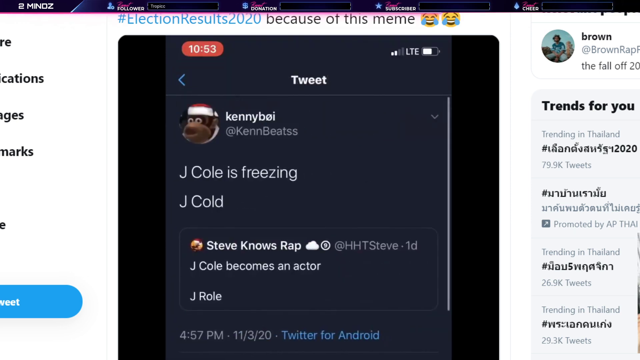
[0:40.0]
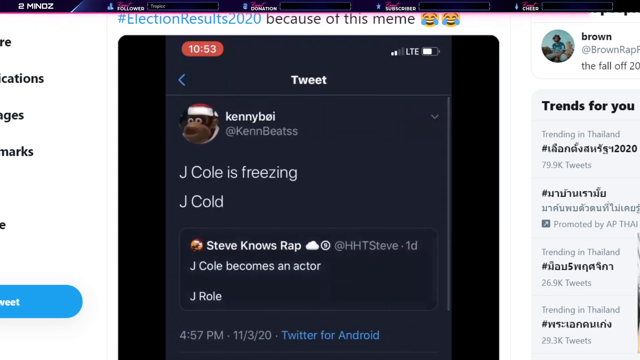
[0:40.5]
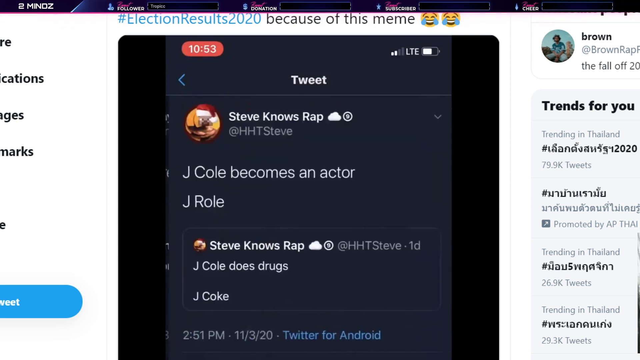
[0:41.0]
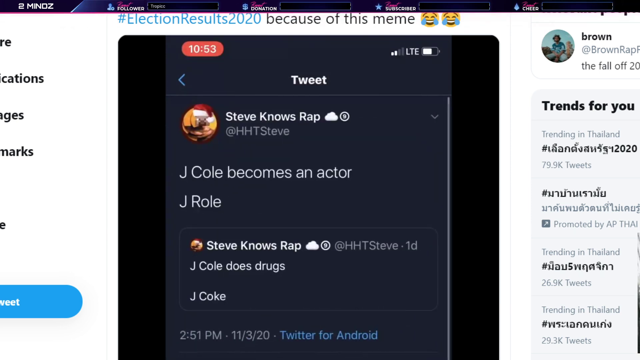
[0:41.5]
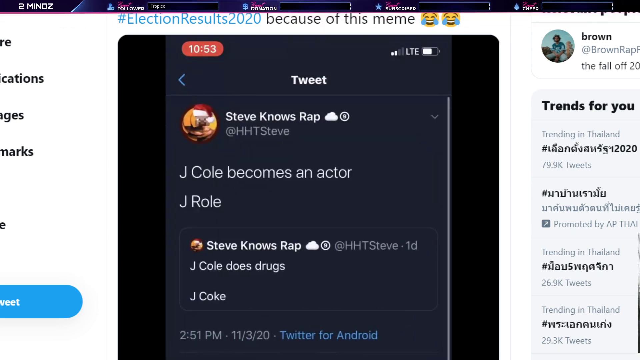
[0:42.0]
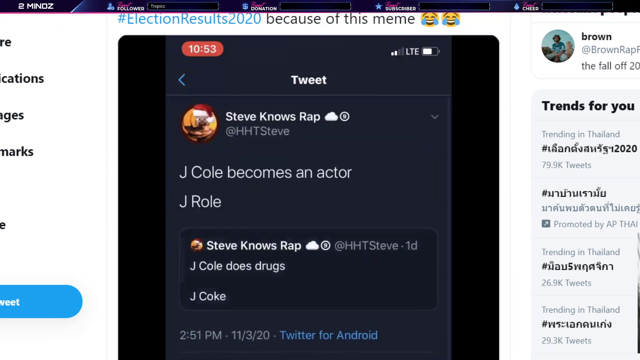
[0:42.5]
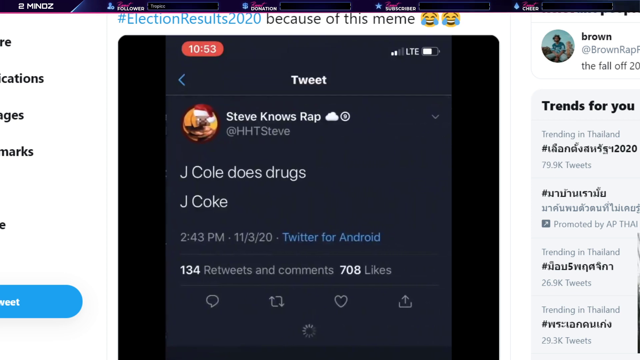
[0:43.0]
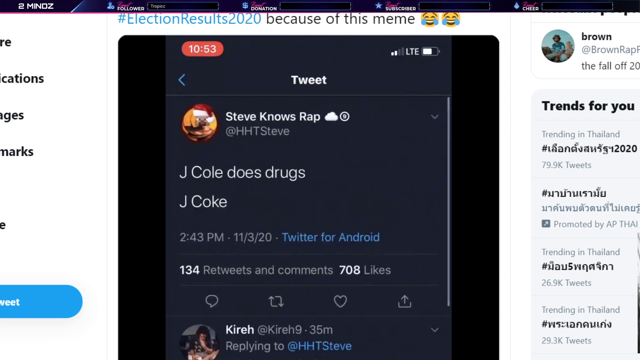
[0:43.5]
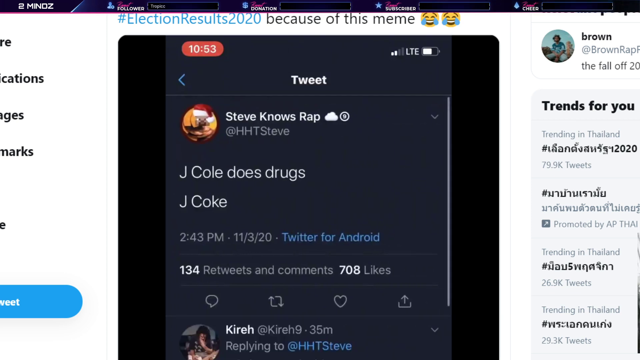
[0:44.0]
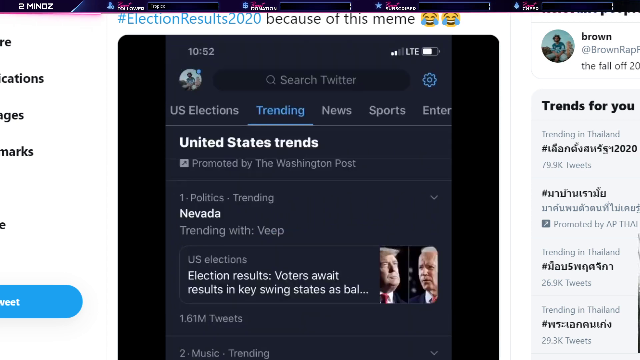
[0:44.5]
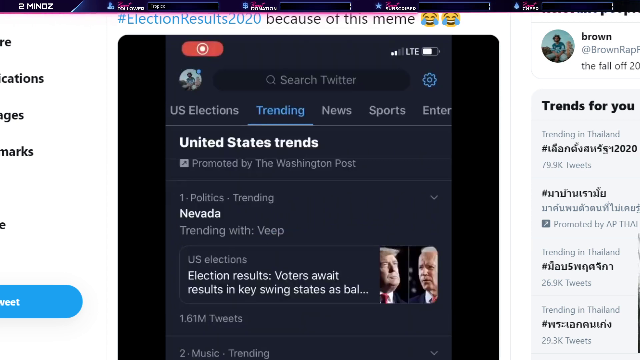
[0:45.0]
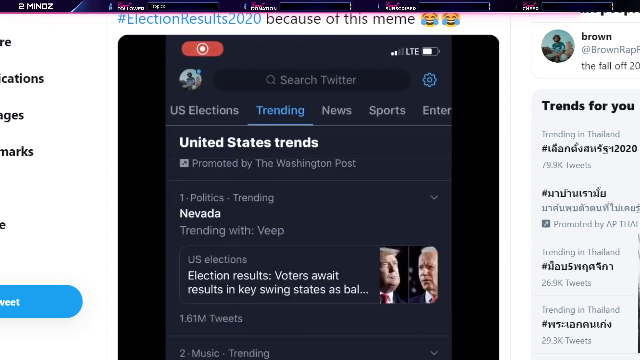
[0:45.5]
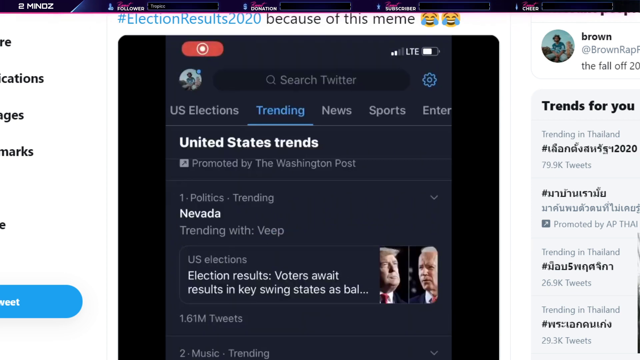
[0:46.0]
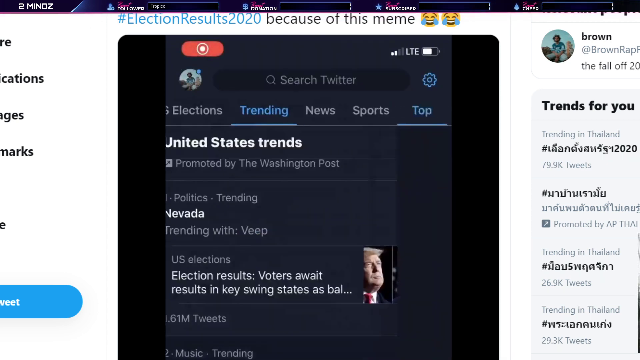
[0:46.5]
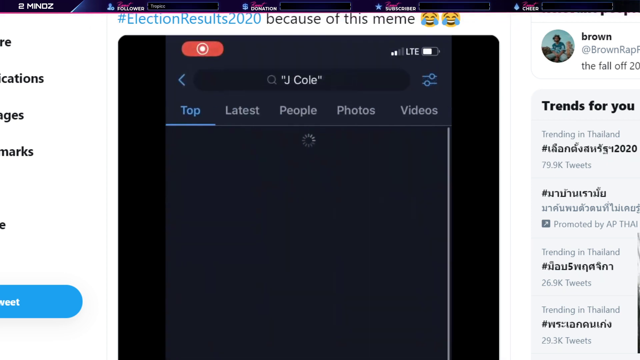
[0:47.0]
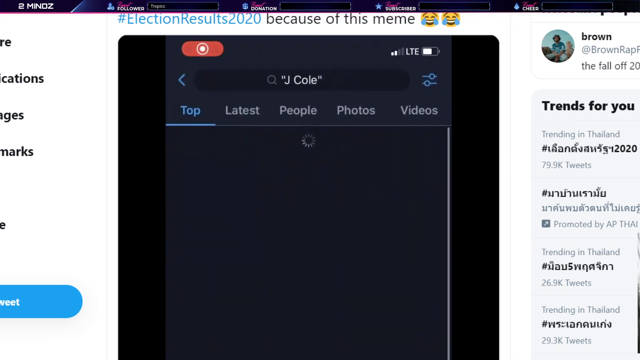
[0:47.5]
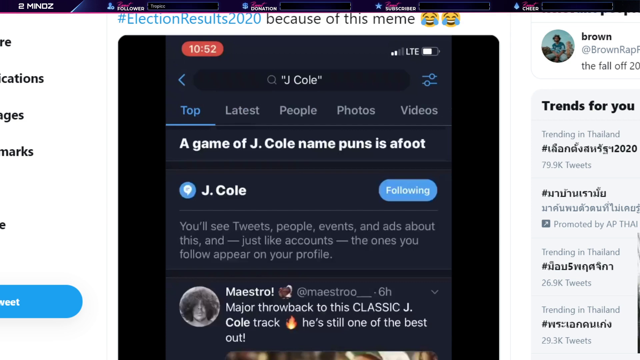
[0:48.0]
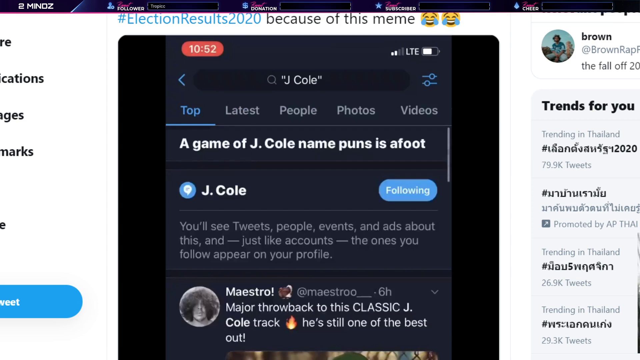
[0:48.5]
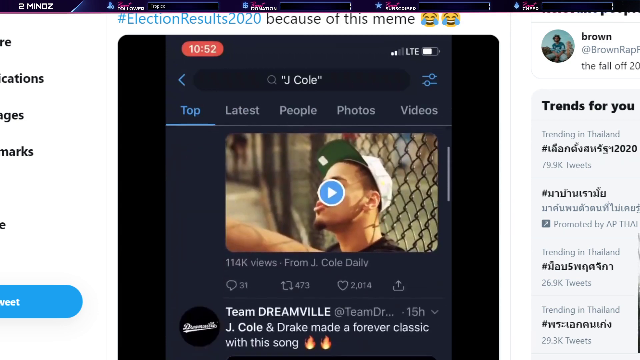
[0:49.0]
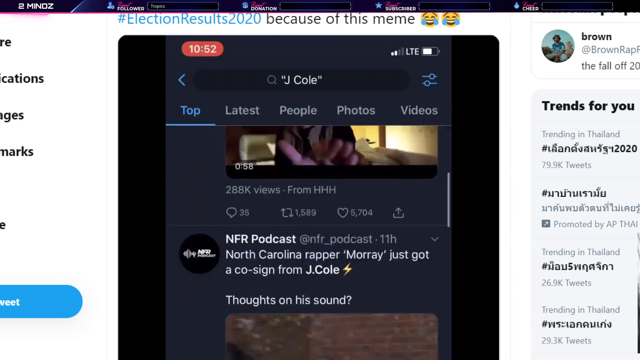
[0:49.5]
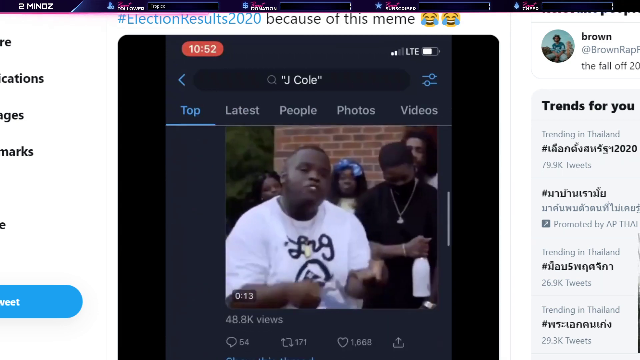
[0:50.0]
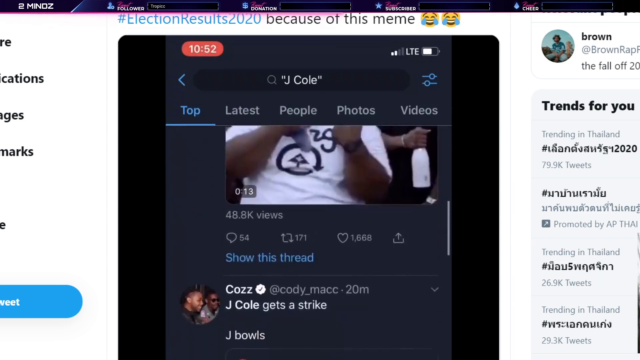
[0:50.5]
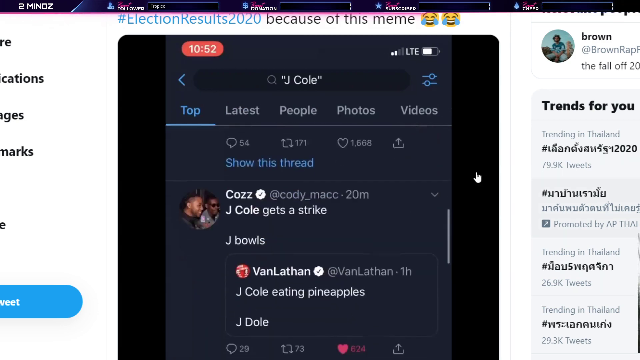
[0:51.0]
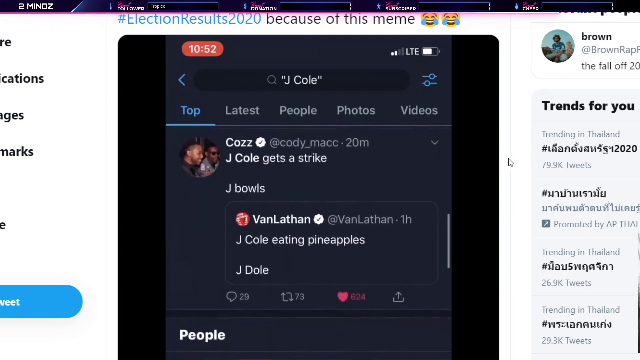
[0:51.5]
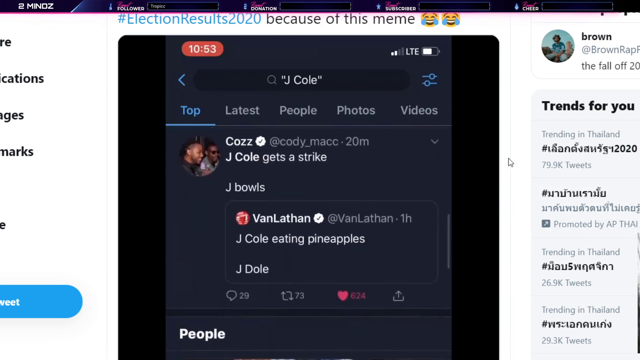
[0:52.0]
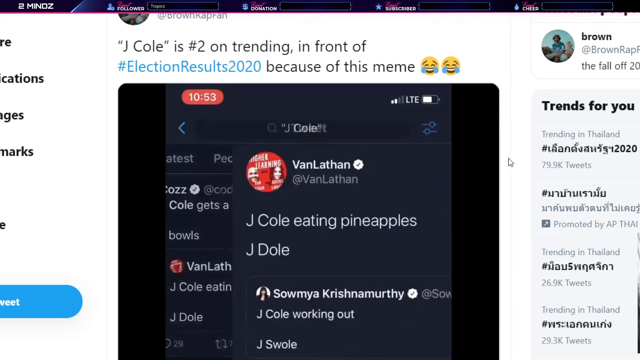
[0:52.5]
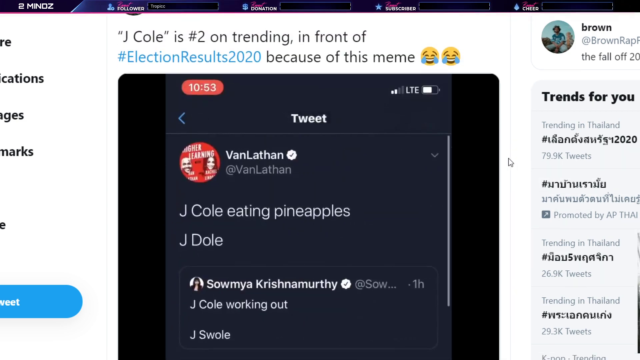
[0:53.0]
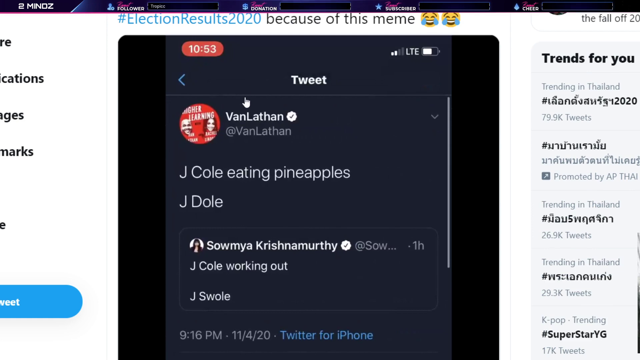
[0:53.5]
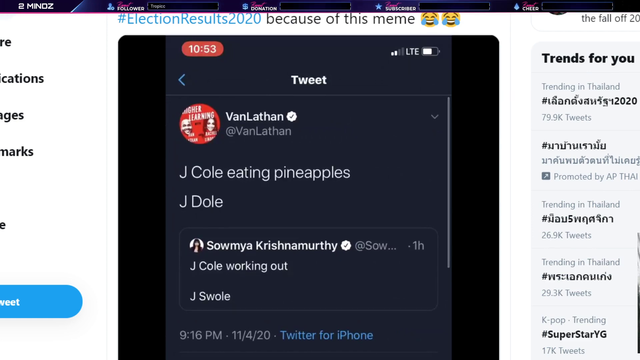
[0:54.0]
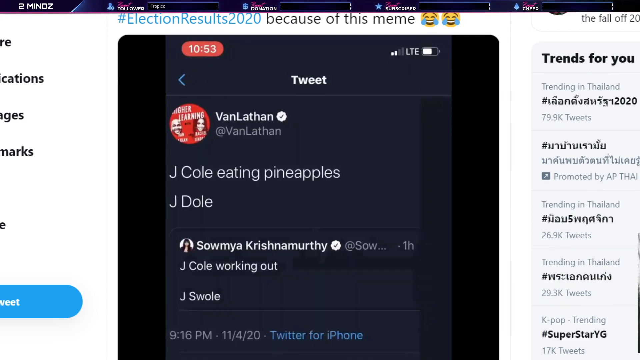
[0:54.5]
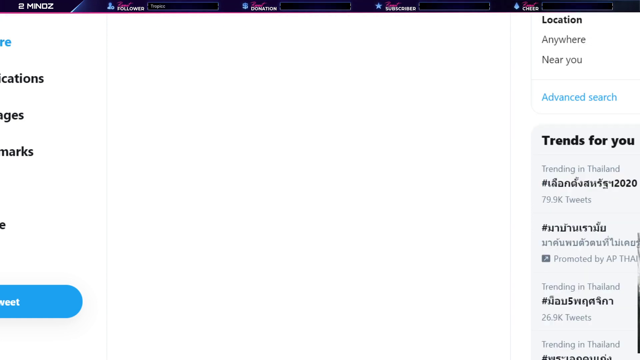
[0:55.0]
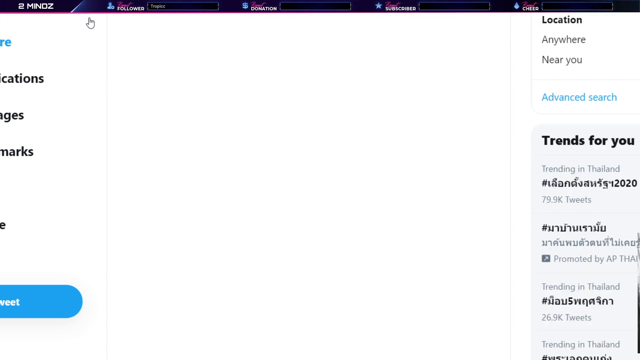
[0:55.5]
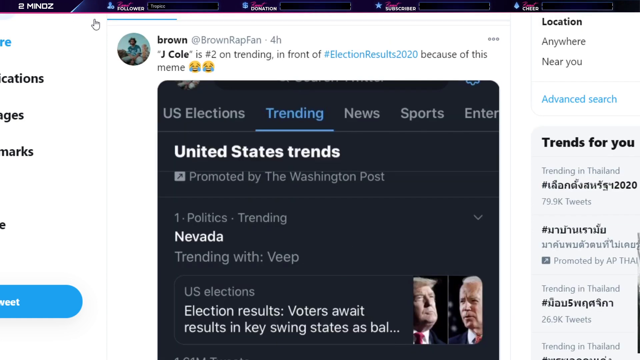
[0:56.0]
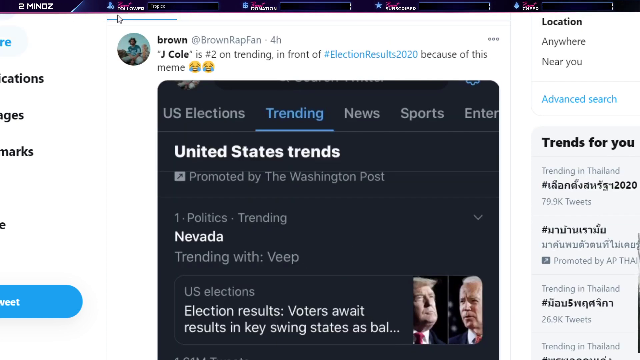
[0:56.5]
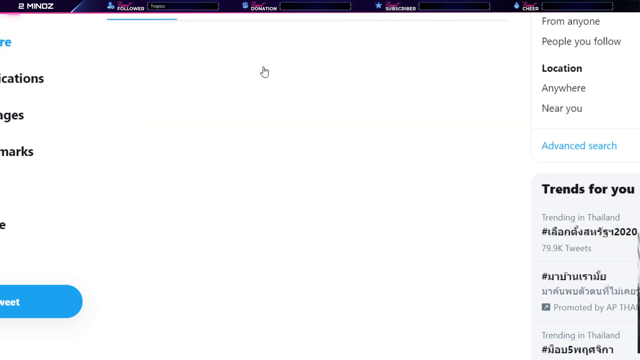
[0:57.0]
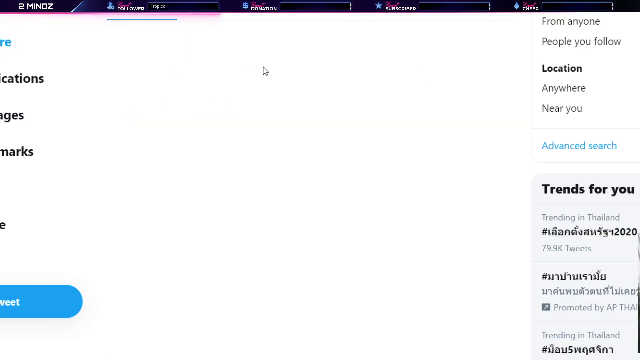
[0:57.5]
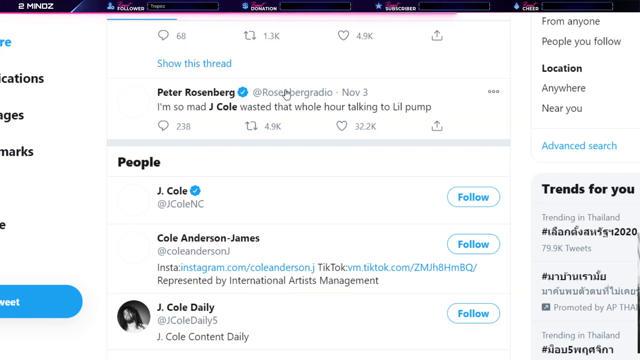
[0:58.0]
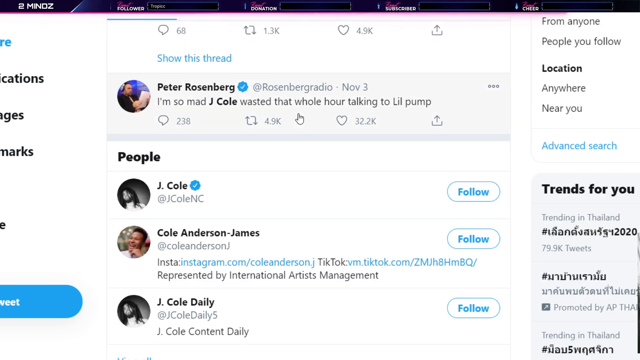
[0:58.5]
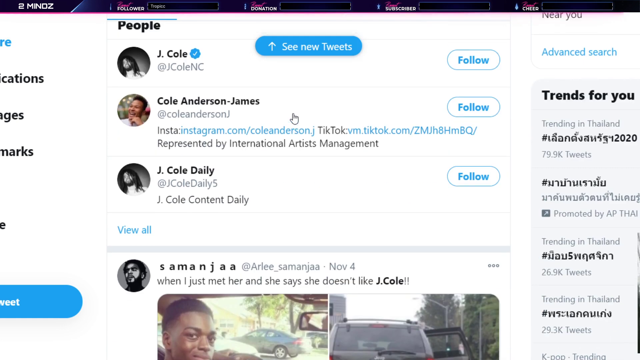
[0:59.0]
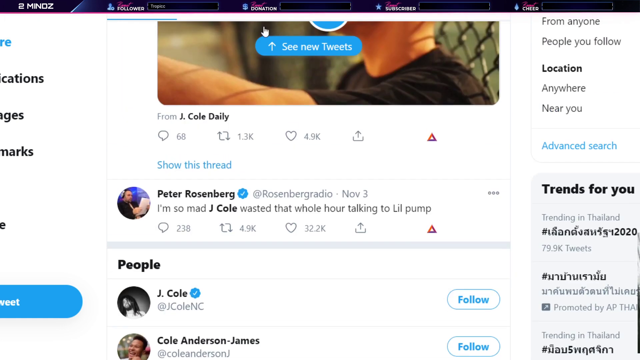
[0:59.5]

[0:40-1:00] Different people tweet about the J. Cole trend on Twitter, with tweets such as "J. Cole becomes an actor. J. Role." and "J. Cole does drugs. J. Coke." The person goes back to the trending bar, with the United States trends at the top, and J. Cole is searched. The name of a J. Cole game appears. He scrolls down, clicks on the J. Cole game and scrolls over it, then moves away from it and looks at other tweets. Two people are shown, J. Cole being the first. The person apparently is not following J. Cole, and the whole time appears to have been watching a video on Twitter, posted by someone else, about the J. Cole game.